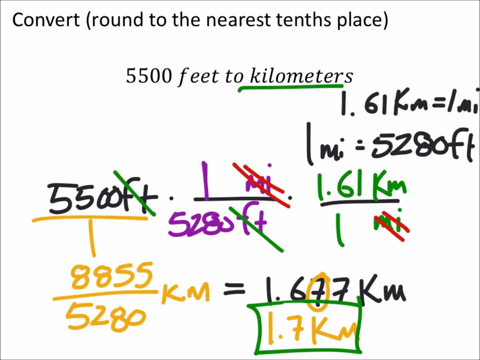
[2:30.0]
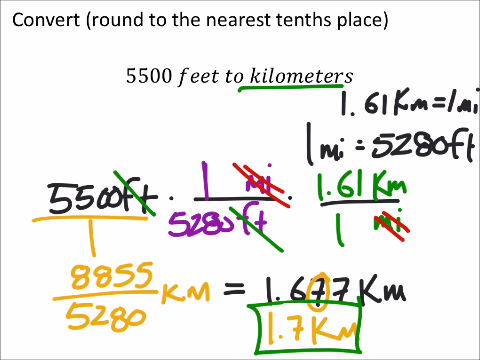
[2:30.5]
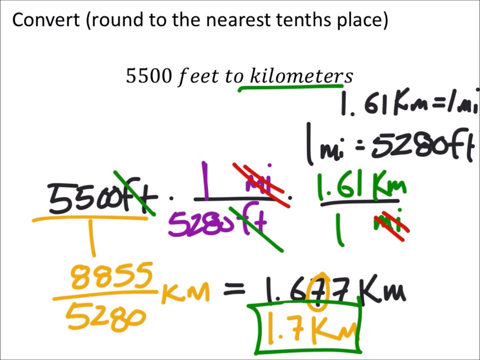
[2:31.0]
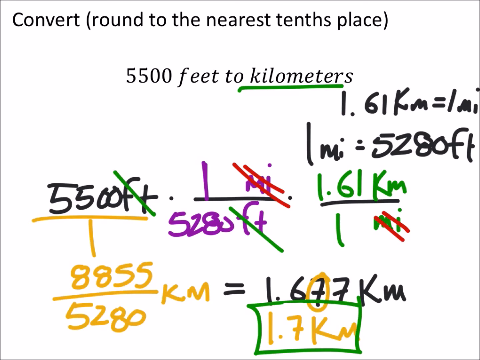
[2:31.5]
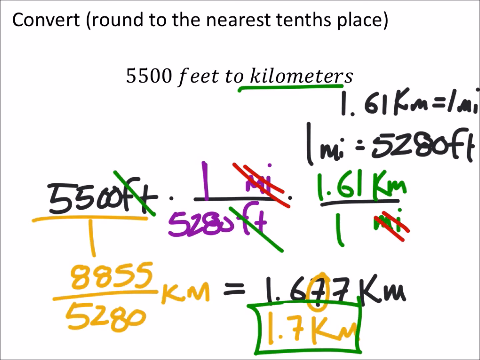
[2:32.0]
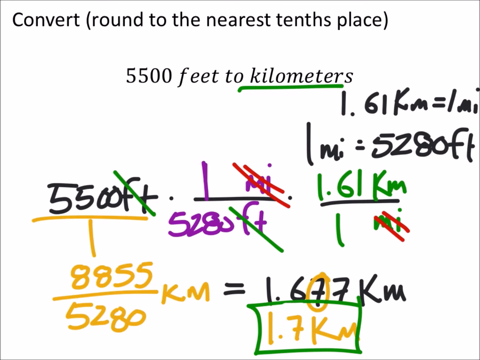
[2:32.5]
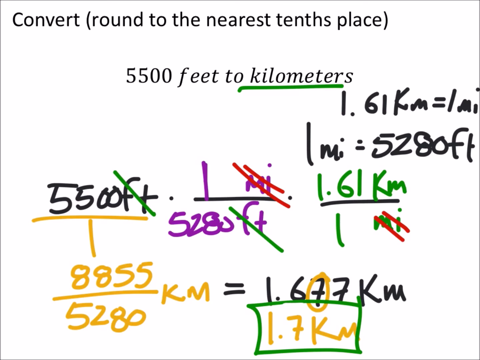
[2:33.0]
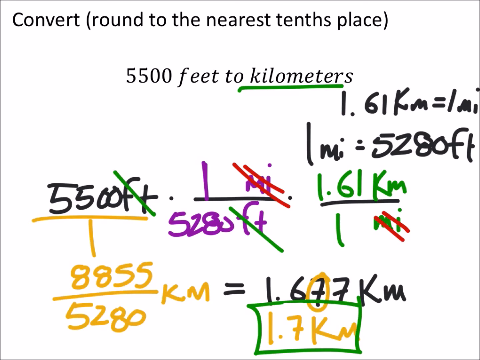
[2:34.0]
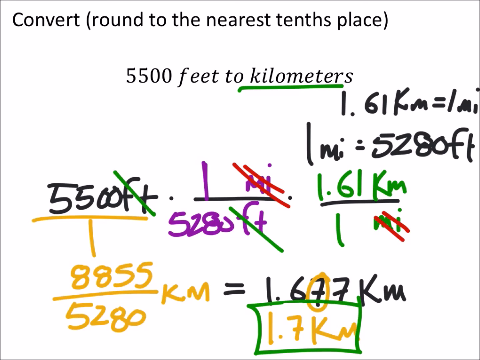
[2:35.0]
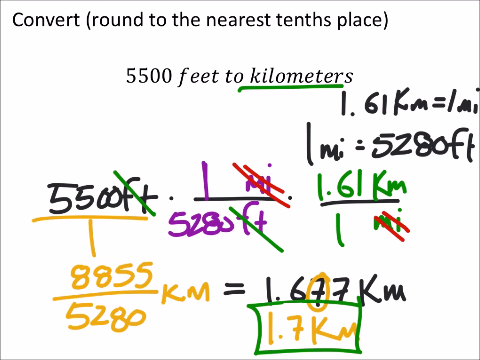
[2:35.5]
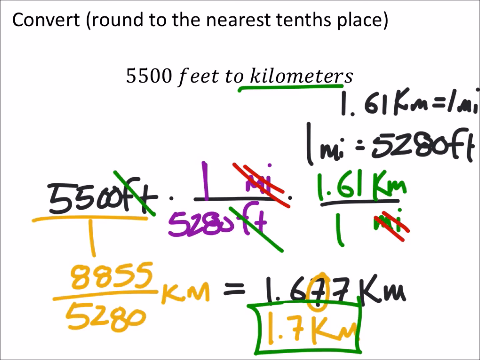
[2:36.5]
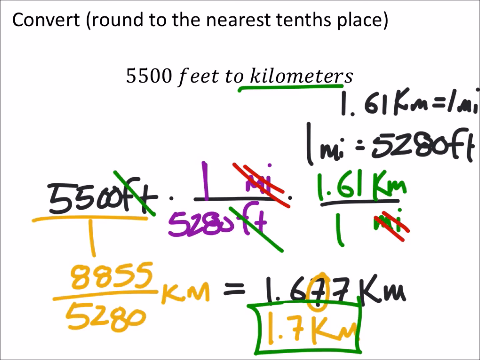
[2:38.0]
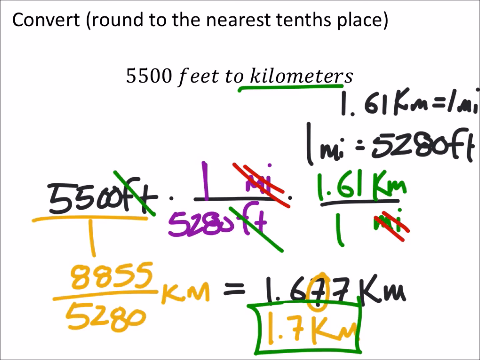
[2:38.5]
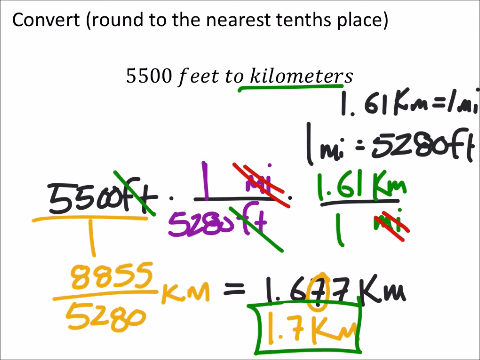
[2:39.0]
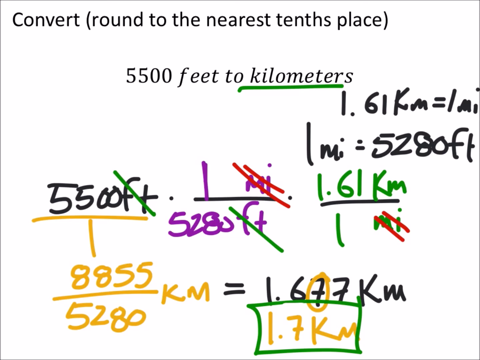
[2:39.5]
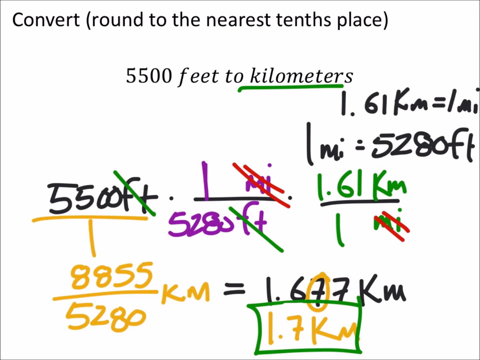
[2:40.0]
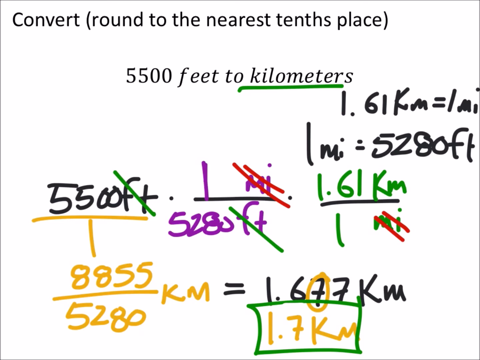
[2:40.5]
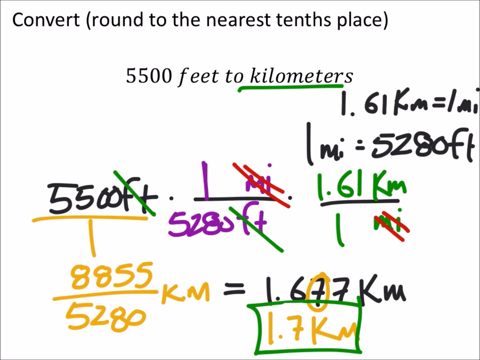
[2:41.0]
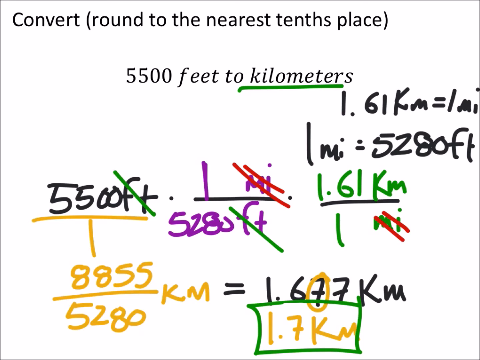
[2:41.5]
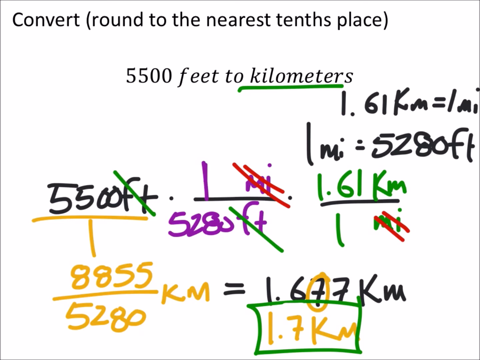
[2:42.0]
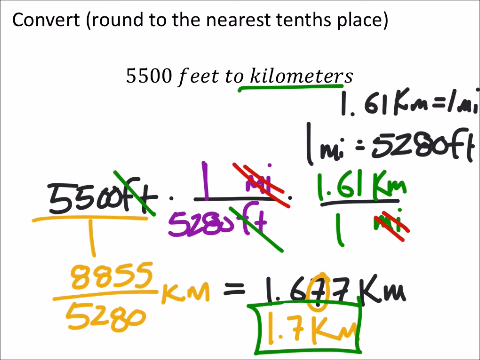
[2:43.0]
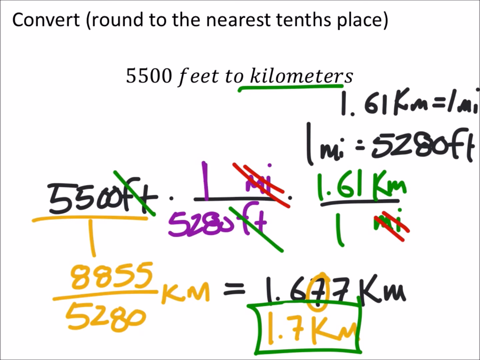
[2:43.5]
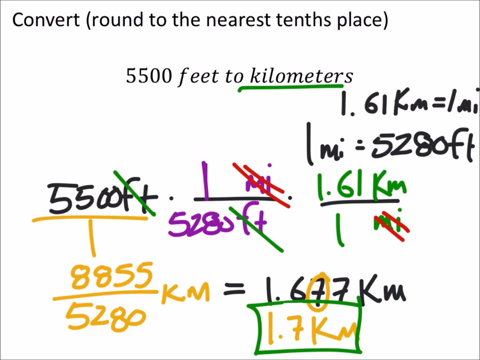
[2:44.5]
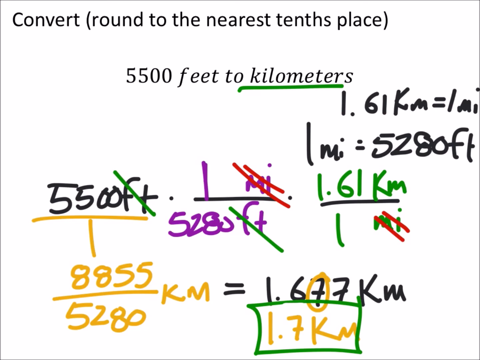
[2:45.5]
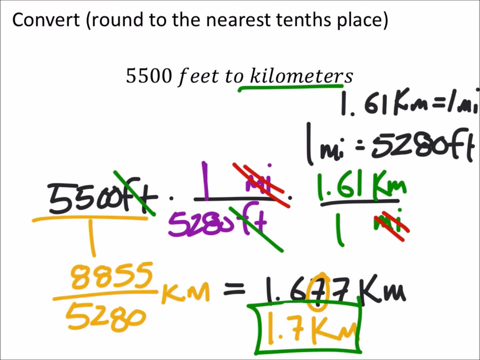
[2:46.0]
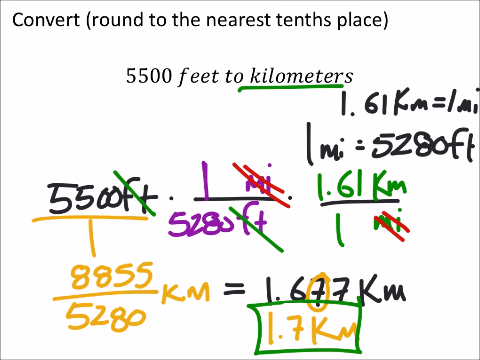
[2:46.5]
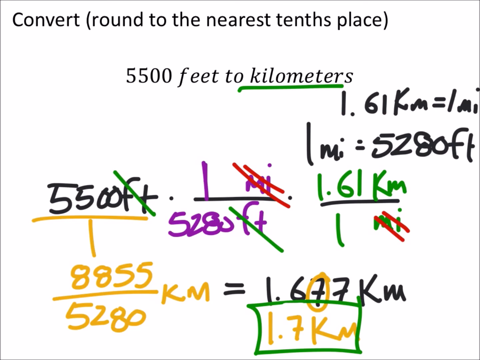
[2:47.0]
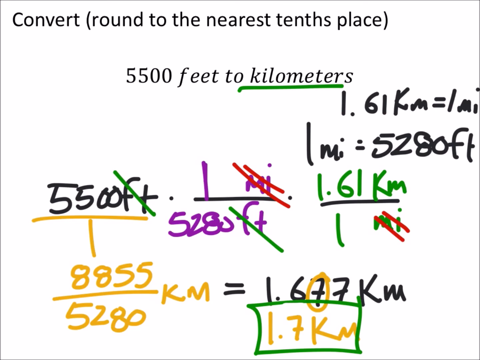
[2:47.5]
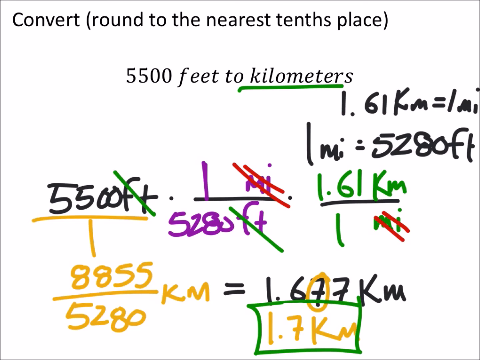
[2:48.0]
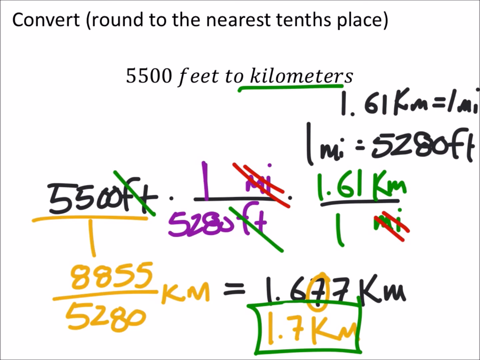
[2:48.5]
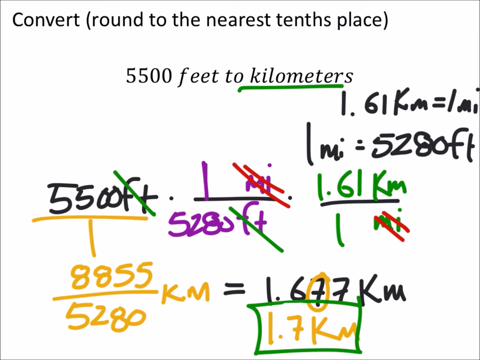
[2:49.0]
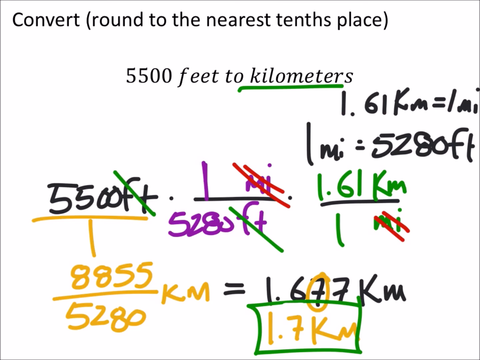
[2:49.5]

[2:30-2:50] The problem asks to convert 5,500 feet to kilometers, rounding to the nearest tenth, with the word kilometer on the line. The formula shows 1.6 kilometers equal to 1 millimeter. The final answer appears to be 1.7 kilometers. The final page shows a new problem: convert 70 gallons to liters, rounding to the nearest tenth.